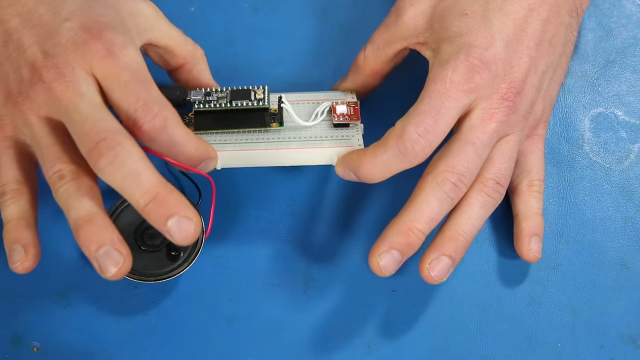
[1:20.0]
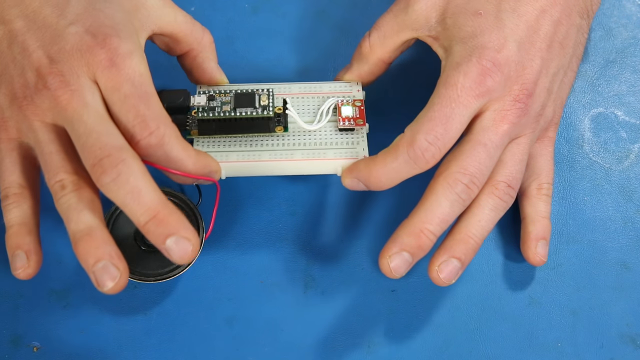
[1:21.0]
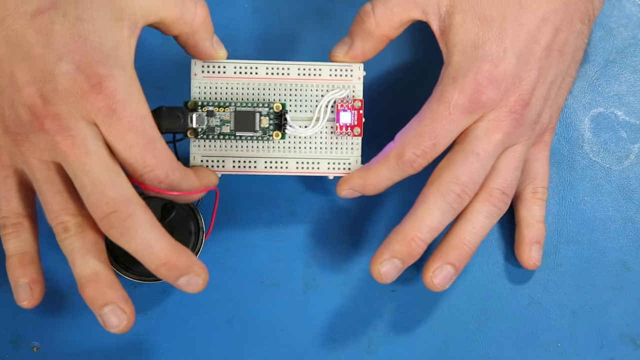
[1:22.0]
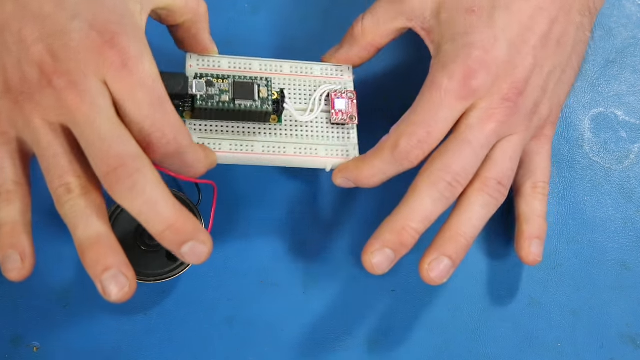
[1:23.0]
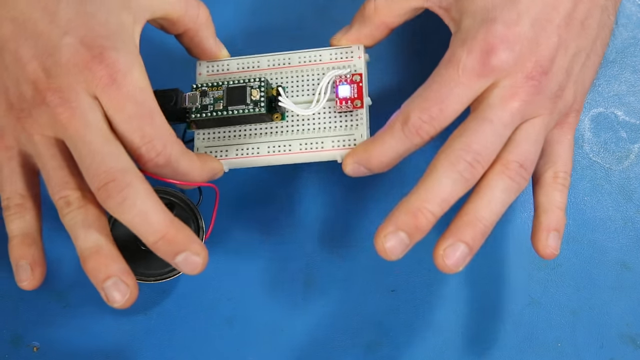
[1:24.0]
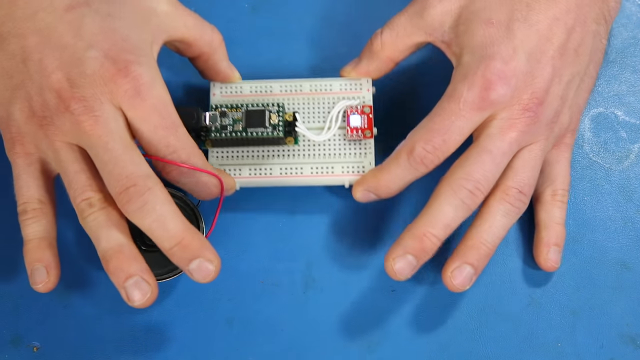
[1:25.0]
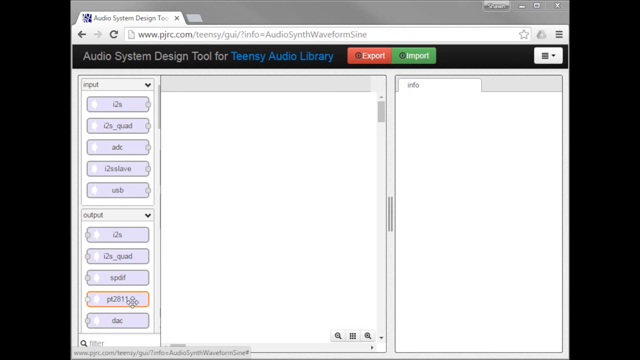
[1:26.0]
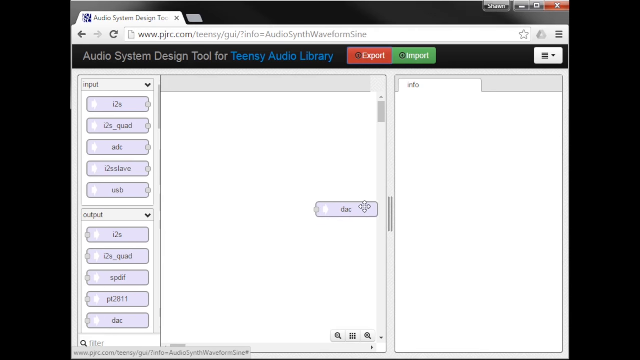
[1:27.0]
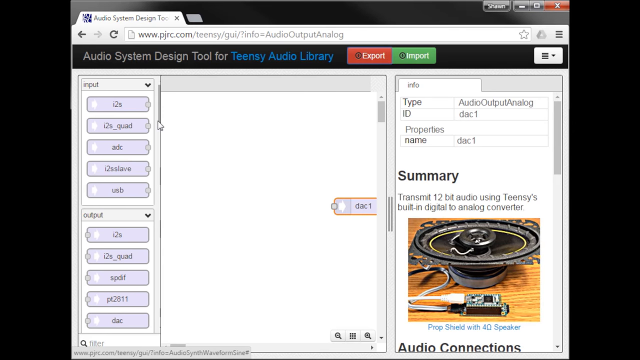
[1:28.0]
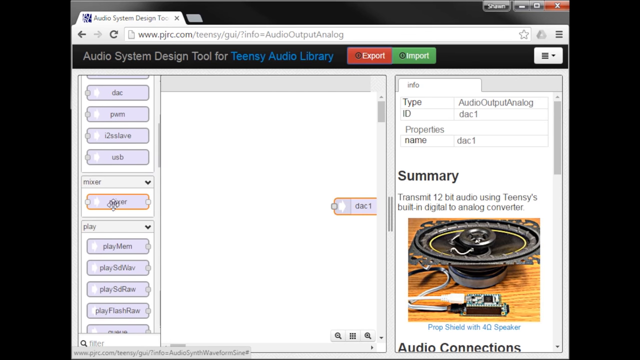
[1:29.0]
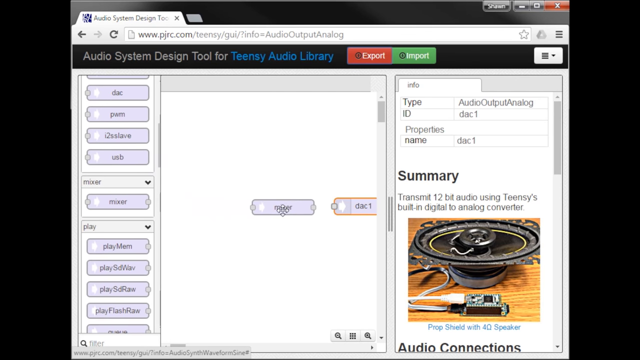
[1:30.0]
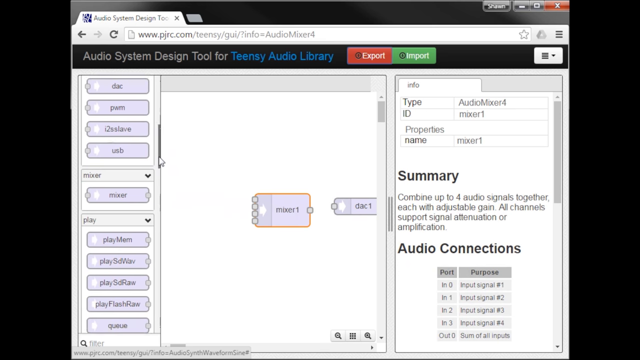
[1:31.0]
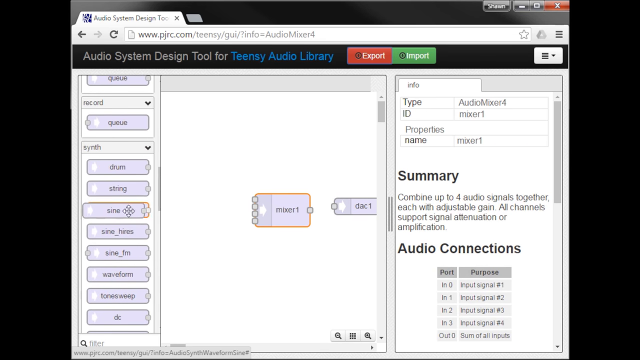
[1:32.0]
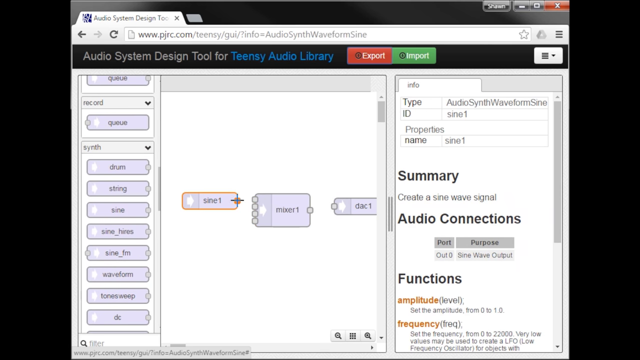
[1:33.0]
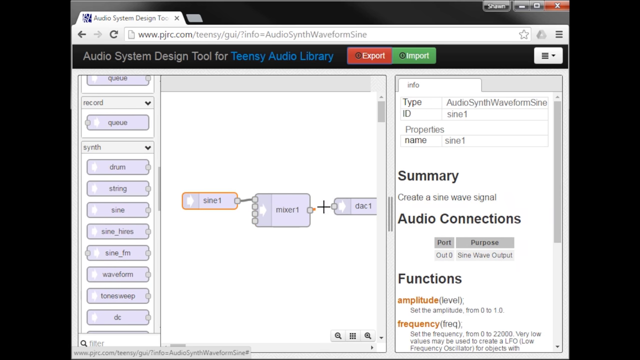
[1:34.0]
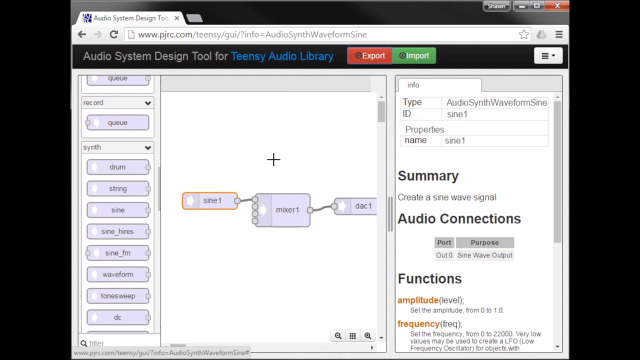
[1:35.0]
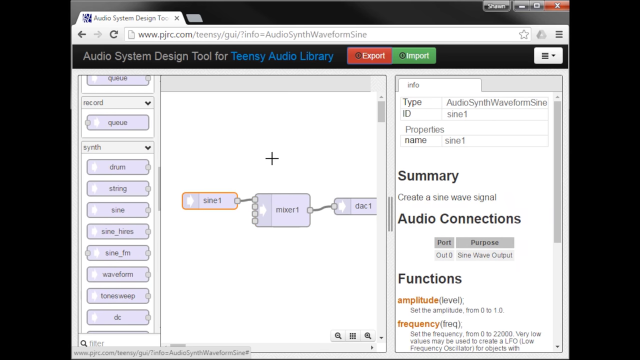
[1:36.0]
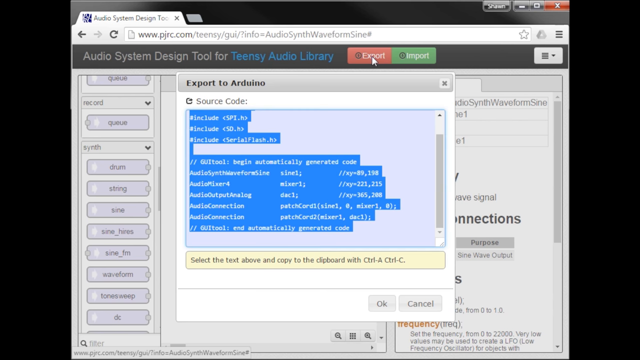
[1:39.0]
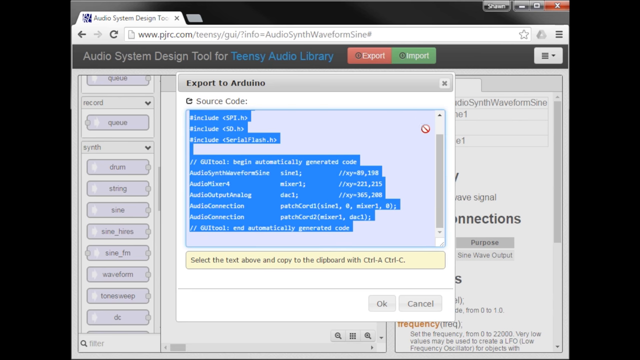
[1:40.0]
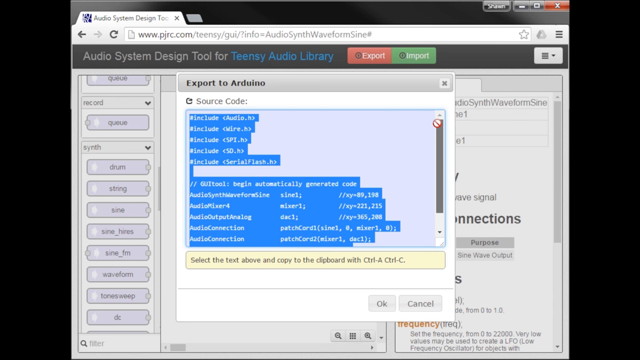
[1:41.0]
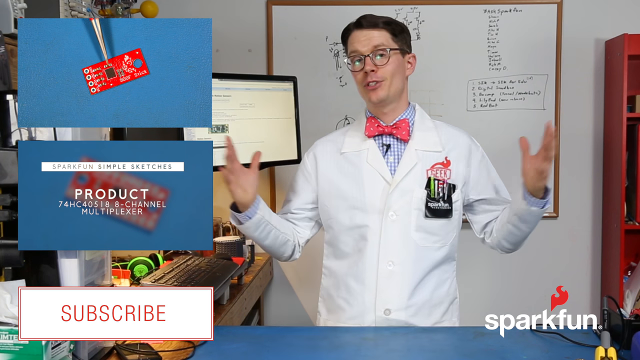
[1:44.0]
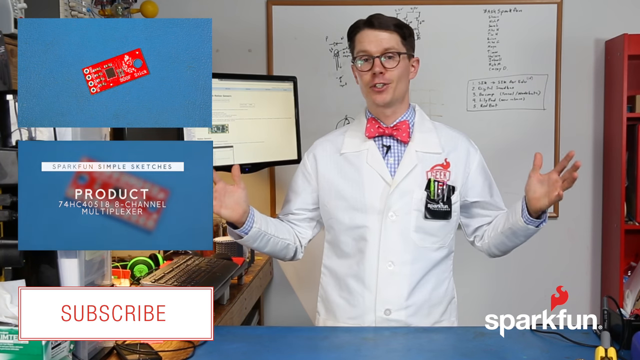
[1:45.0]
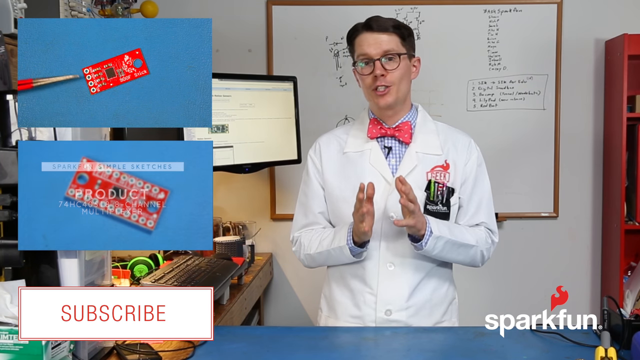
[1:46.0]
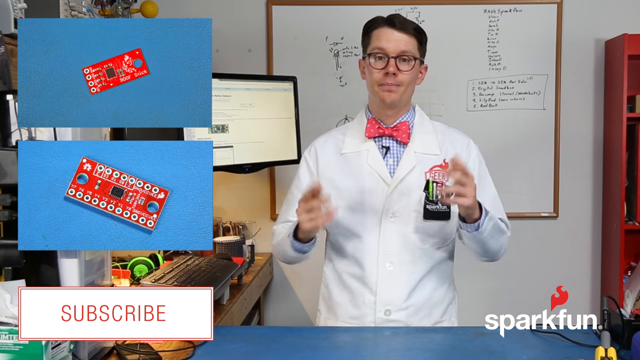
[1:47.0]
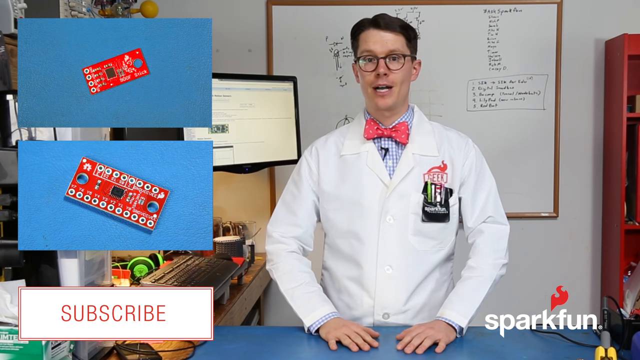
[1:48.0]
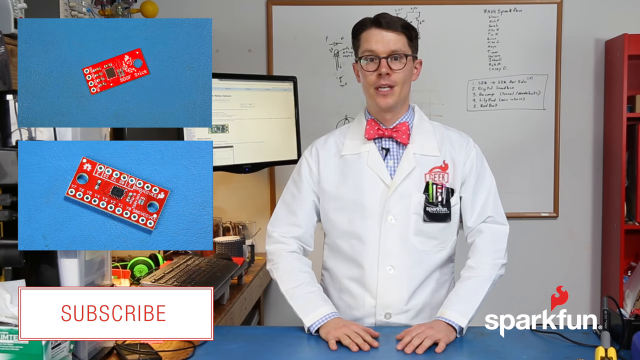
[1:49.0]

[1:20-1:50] Hands are shown in front of a blue desk with a textured design, with a dent on the far right that refracts the light. The hands grip the device, which seems to be made of white plastic, and move it around to show its different aspects at different angles. A red wire and a black wire come off the device, which is wired into a speaker, and a green microchip on it is wired with three white wires to a red microchip. The hands keep moving it around in circles, quite fast, with a little wiggle at the end. The scene changes to a computer screen showing a window with a tab reading "Audio System Designs TO", the rest of the word trailing off, and the address "www.pjrc.com/teensy/gui/?info=AudioOutputAnalog" in the address bar. There are export and import buttons; the export button is red and the import button is green. There is a menu, and under it another menu with an arrow, with different input and output settings. A mouse cursor comes down, grabs a section labeled "DAC1" and moves it to the middle of the screen. An Info tab opens, reading "Type Audio Output Analog ID DAC1, Properties Name DAC1", with a summary that says "transmit 12-bit audio using TNC's built-in digital-to-analog converter". The mouse pointer moves across the screen and scrolls down to the mixer section, which is grabbed and moved to the center of the screen along with a "Sign 1" section. The Sign 1 section is connected to the Mixer 1 section, which is connected to the DAC 1 section. The mouse hovers in the center of the screen for a few seconds before clicking the export button at the top. A pop-up window reading "export to Arduino" appears with some source code, which is copied, and an alert says "select the text above and copy it to the clipboard with ctrl a ctrl c". The mouse scrolls through. A new scene shows the scientist in a white lab coat, a gingham shirt and a pink bow tie; he is a white male with glasses and brown, nerdy parted hair. "Spark Fun" appears at the bottom right, and to the left are a few different videos and the option to subscribe. The scientist continues to speak.